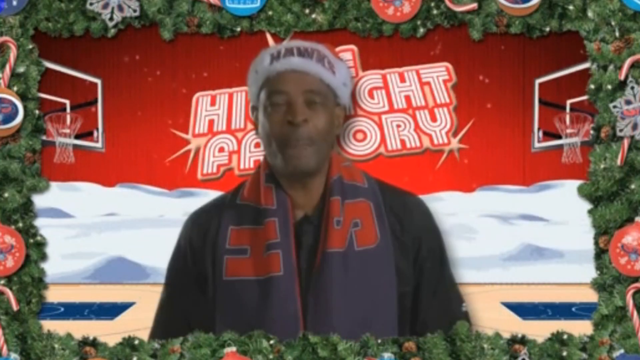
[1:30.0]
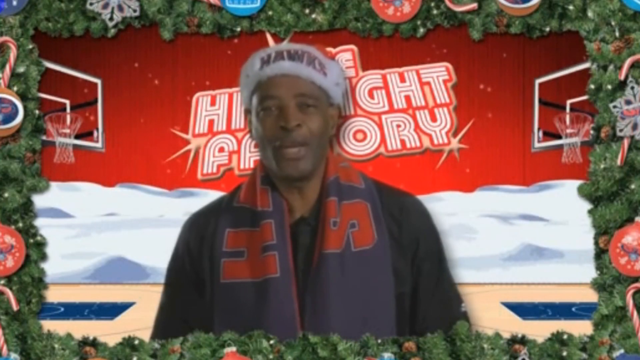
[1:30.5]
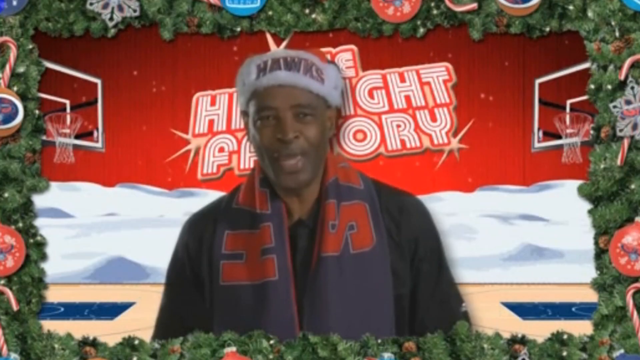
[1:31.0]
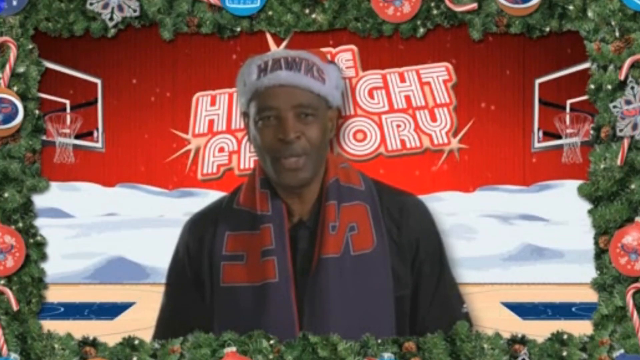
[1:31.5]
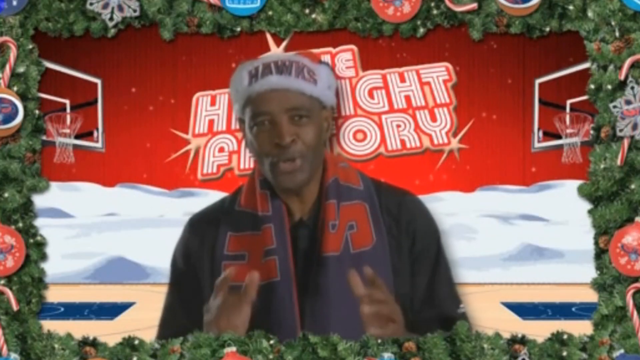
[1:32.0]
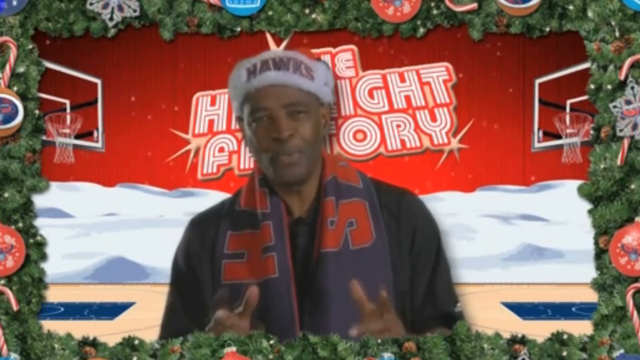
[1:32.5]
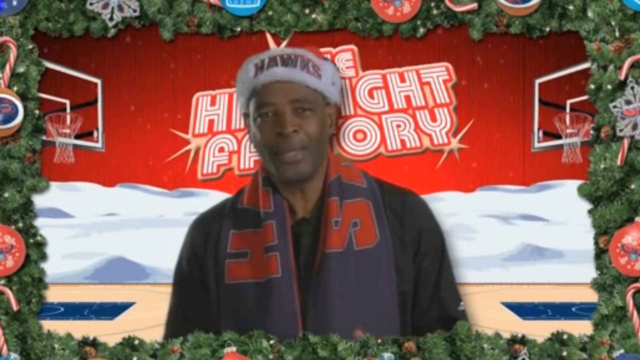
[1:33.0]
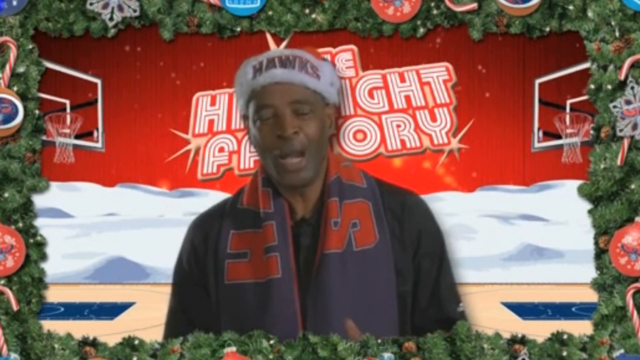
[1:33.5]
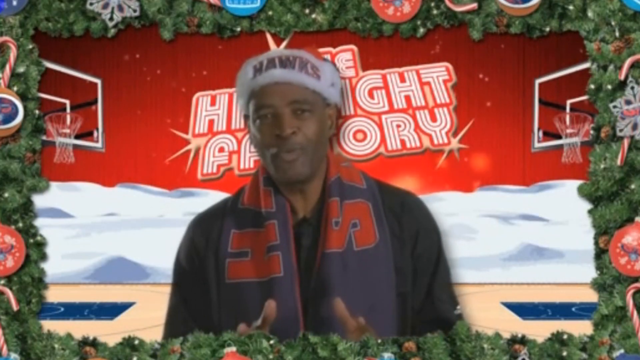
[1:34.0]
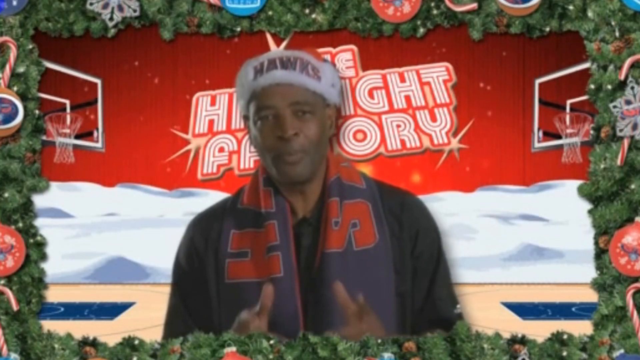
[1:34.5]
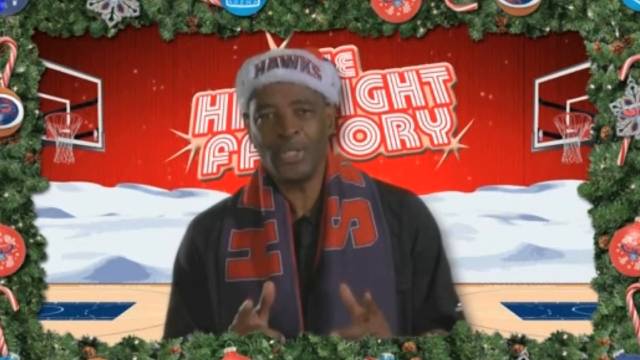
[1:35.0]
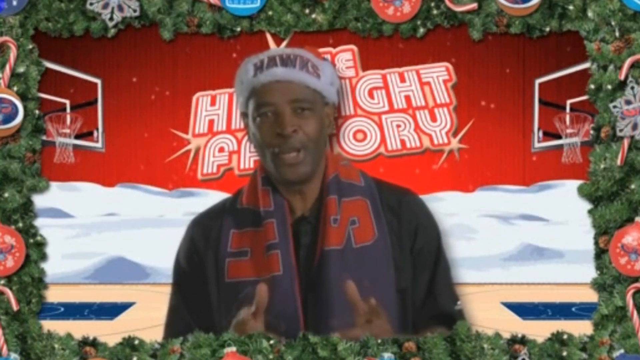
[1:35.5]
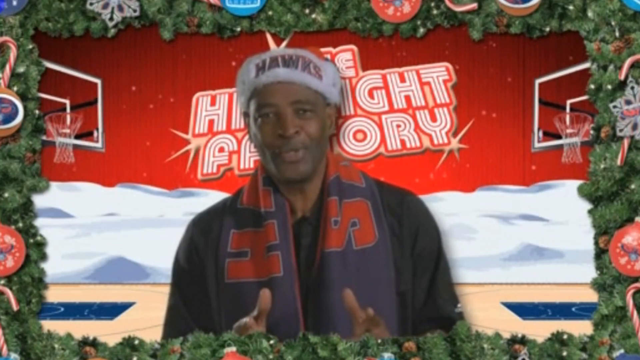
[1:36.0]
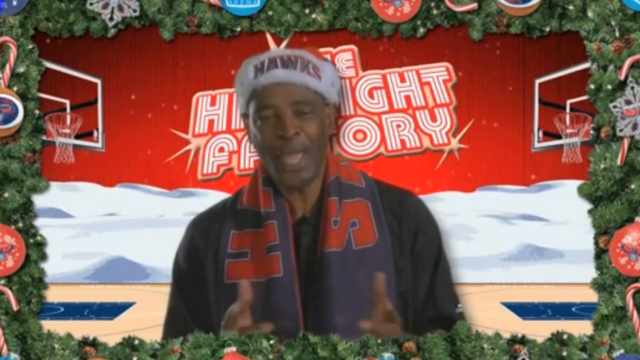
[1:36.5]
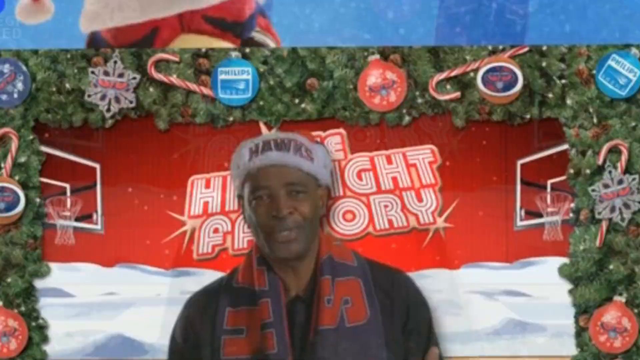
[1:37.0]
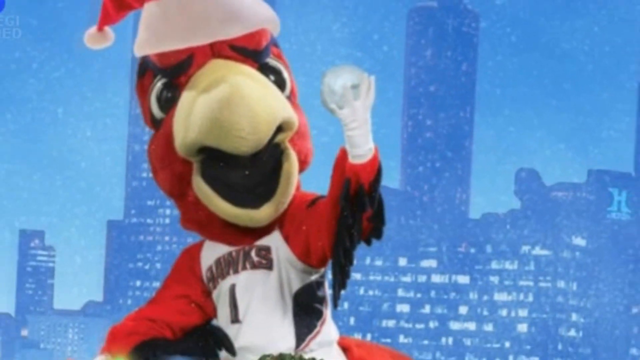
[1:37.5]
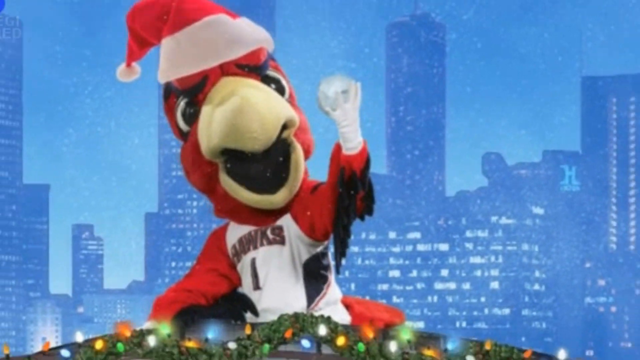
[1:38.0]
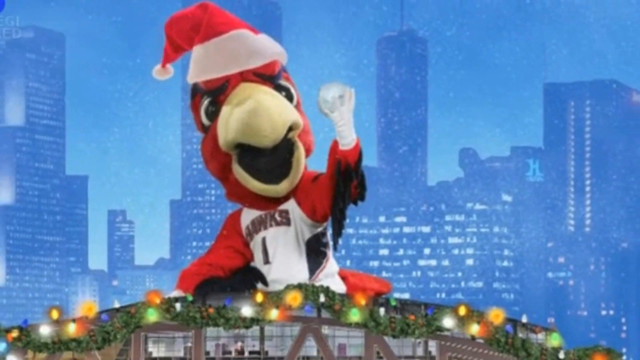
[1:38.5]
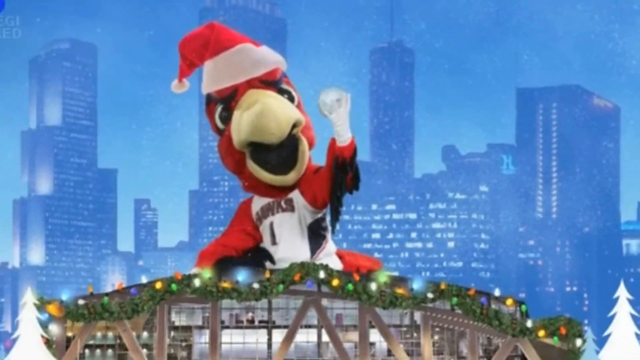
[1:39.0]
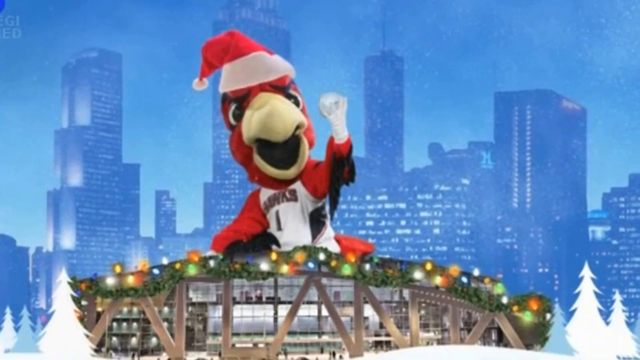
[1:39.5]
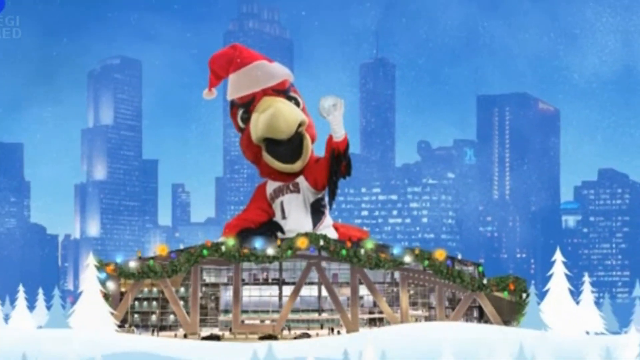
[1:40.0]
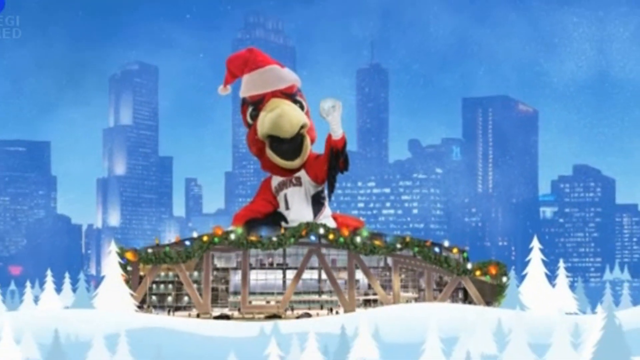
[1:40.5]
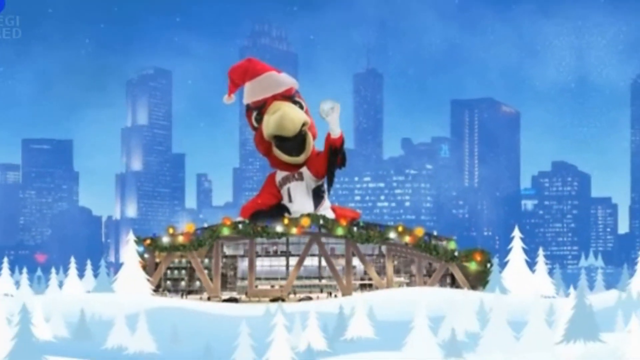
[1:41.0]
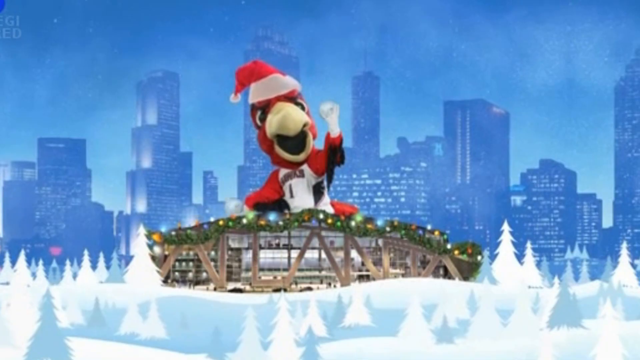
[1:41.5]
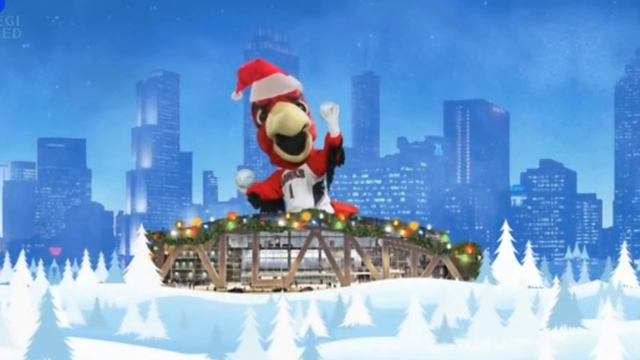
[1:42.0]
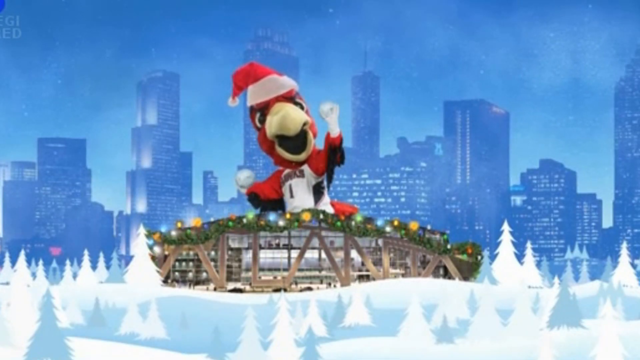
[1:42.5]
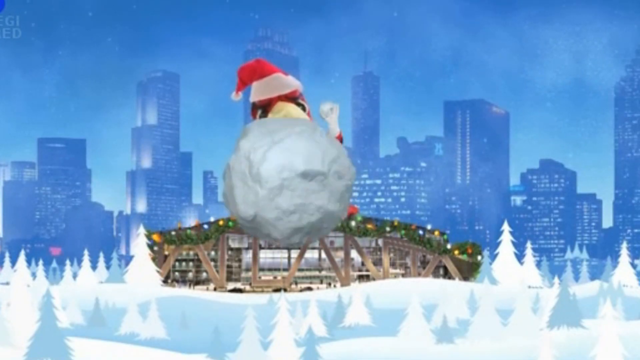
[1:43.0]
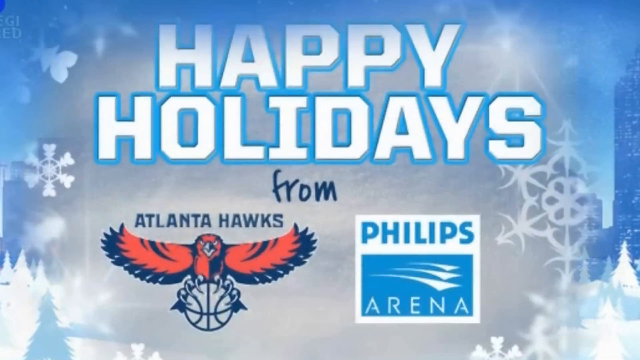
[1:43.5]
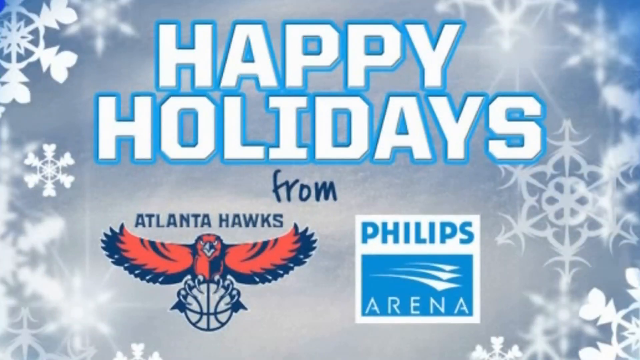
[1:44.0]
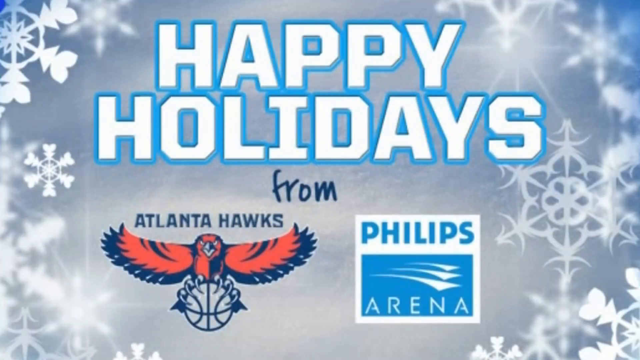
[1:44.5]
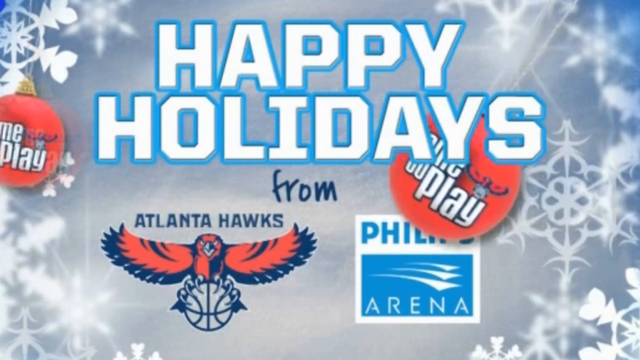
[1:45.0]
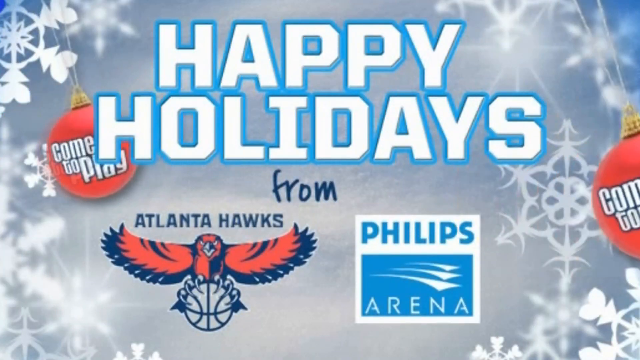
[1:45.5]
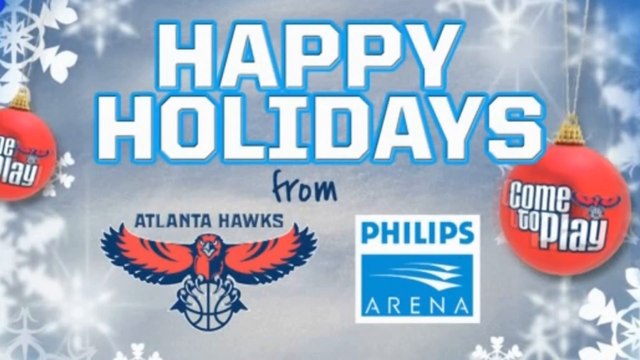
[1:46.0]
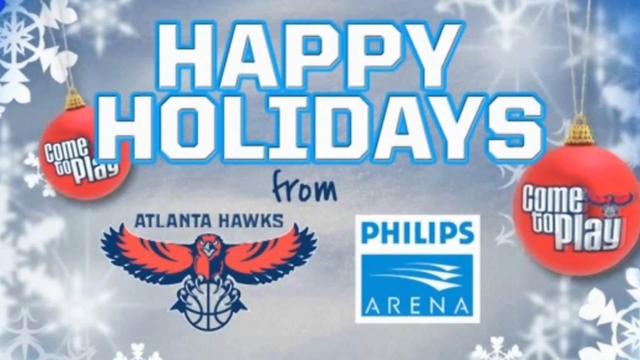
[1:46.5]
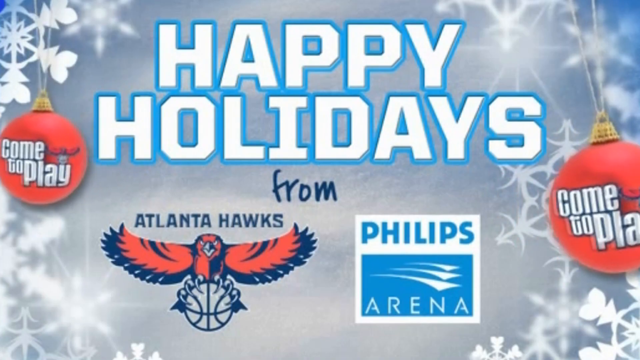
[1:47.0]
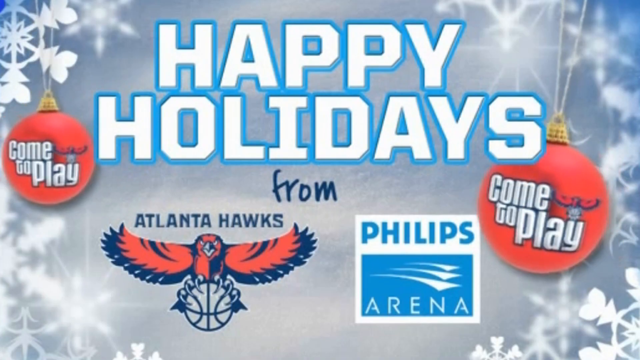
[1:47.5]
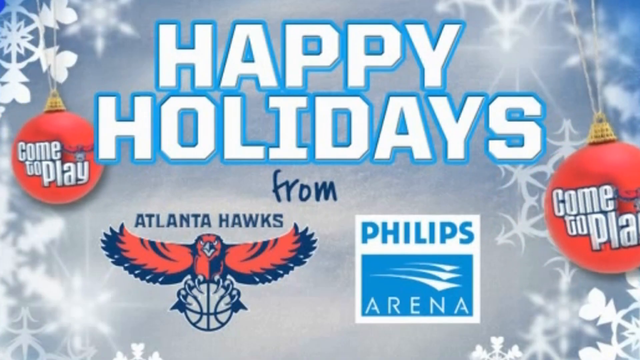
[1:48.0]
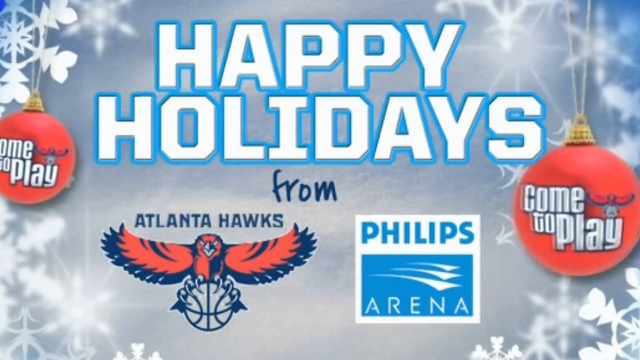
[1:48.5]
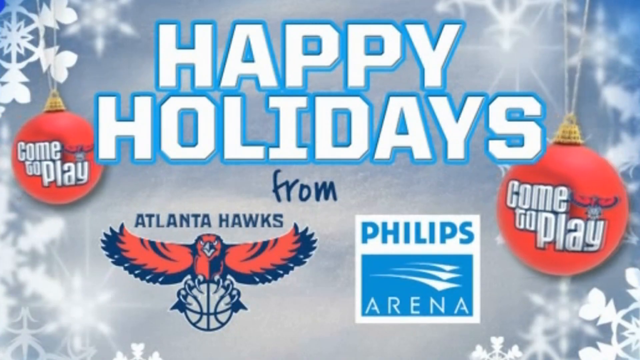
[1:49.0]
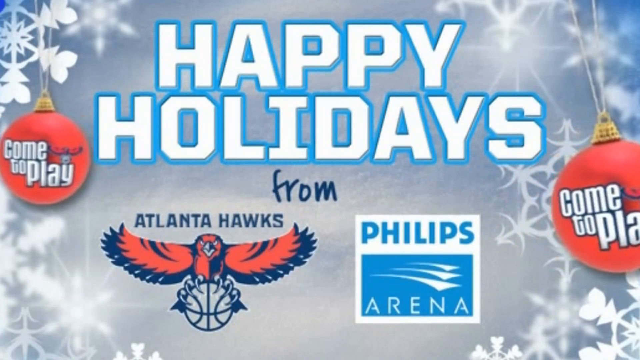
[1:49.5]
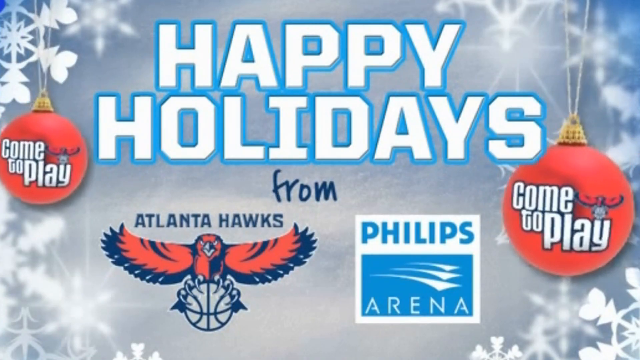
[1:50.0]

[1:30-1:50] Atlanta Hawks players stand in a Christmas-themed setting, talking to the camera. Some put their hands up in front of them and gesture, kind of pointing at the camera with their palms open. Toward the end, the Atlanta Hawks mascot sits on top of the stadium, whose roof is covered in blinking Christmas lights. The Atlanta skyline is in the background and a winter scene is in the foreground. A snowball comes from the stadium area up to the front of the screen. At the end, the screen says "Happy Holidays from" with the Atlanta Hawks mascot and logo and the Phillips Arena logo. Two red Christmas ornaments with white writing reading "come to play" appear, one on the left and one on the right, slowly swinging from left to right.